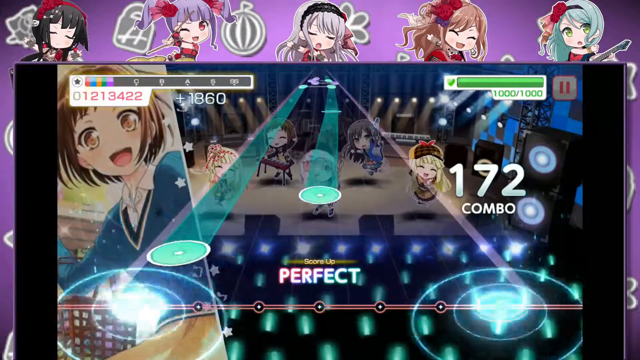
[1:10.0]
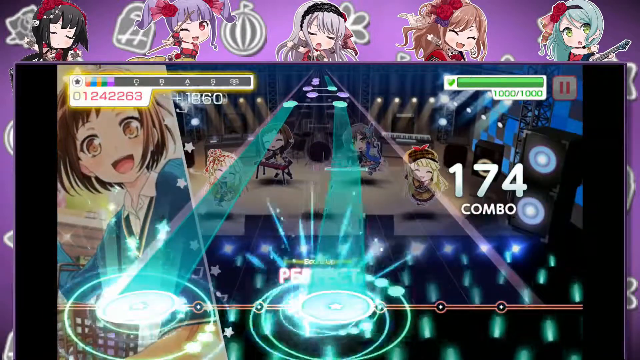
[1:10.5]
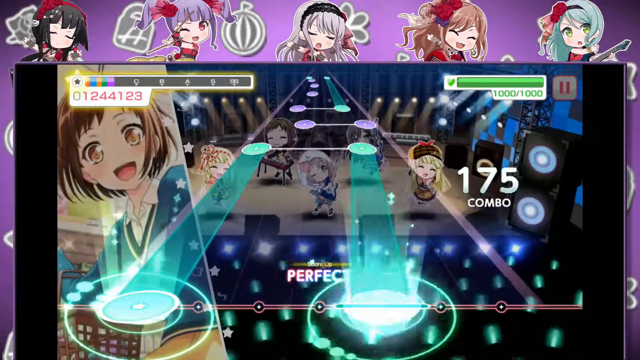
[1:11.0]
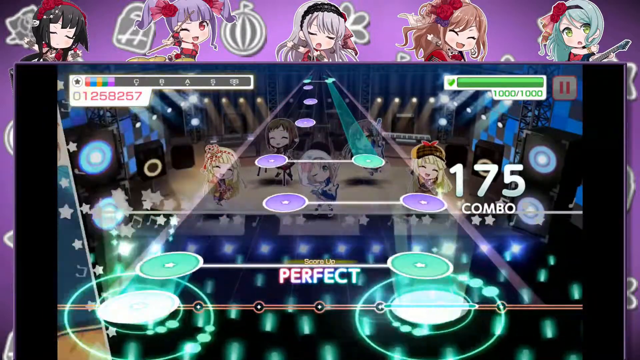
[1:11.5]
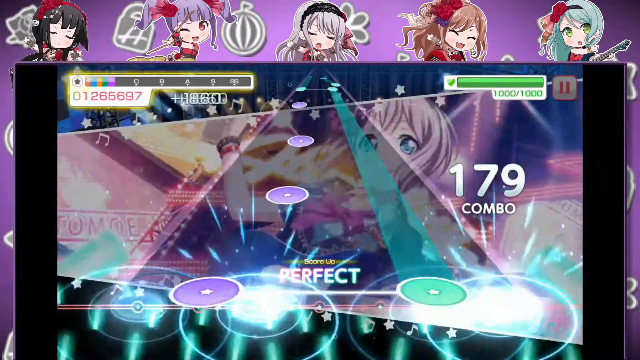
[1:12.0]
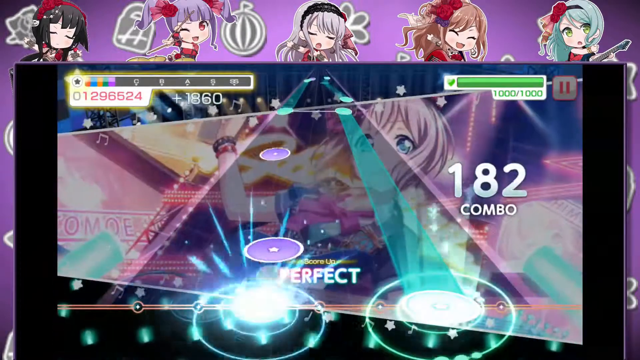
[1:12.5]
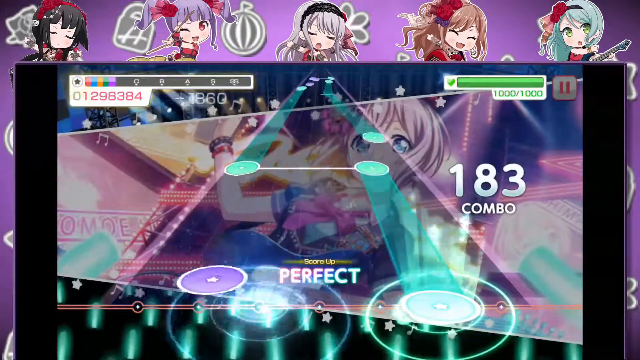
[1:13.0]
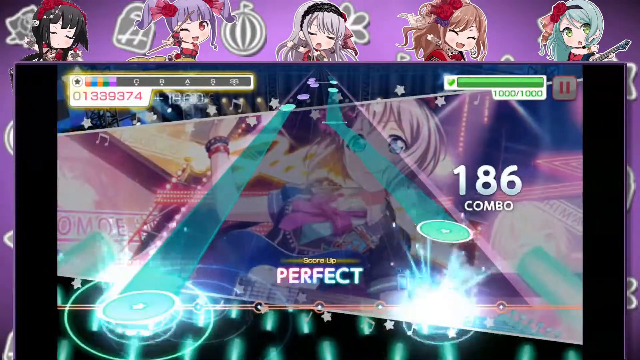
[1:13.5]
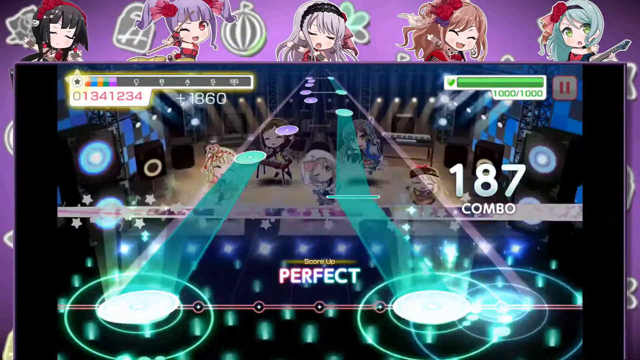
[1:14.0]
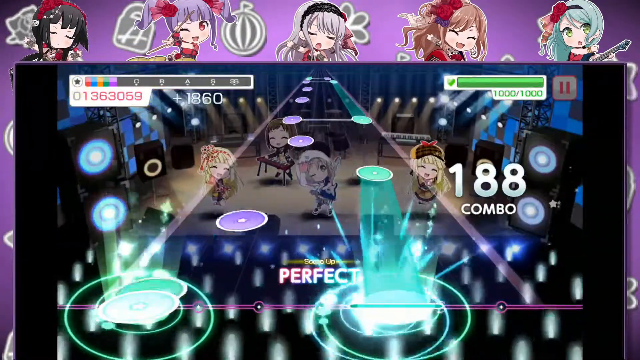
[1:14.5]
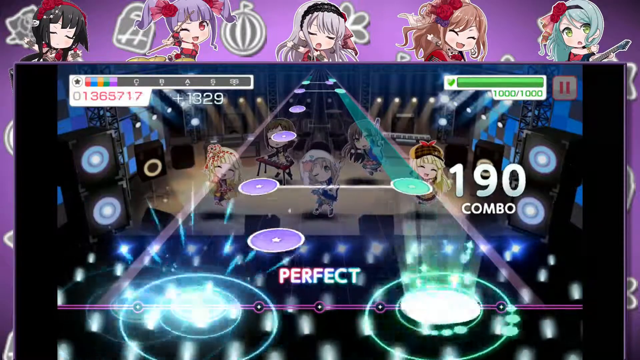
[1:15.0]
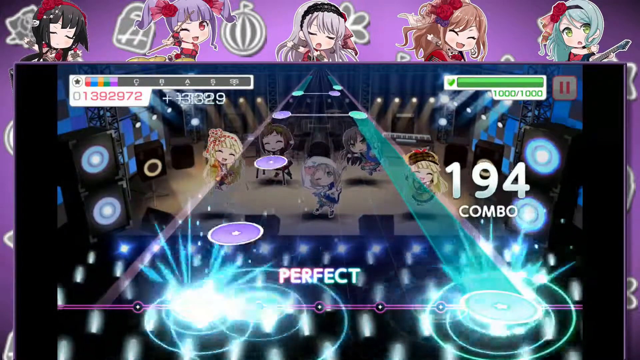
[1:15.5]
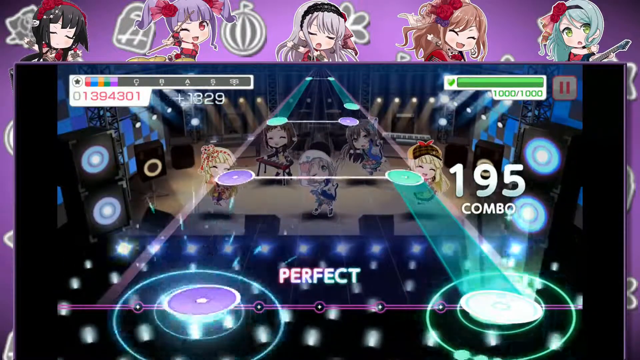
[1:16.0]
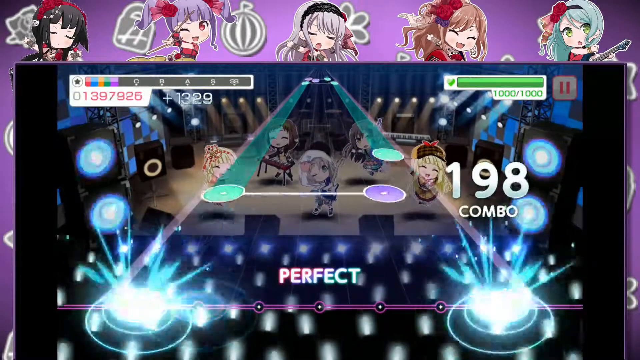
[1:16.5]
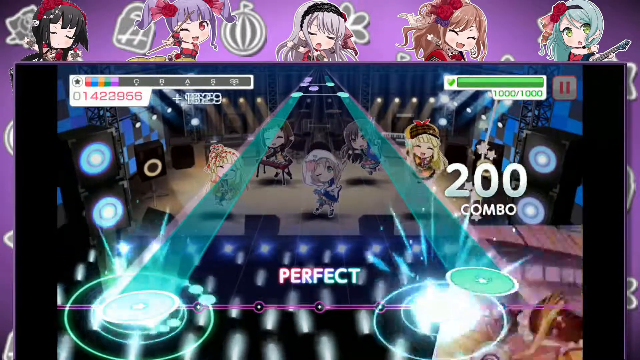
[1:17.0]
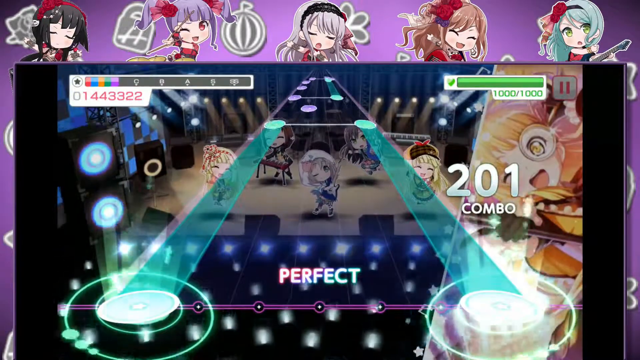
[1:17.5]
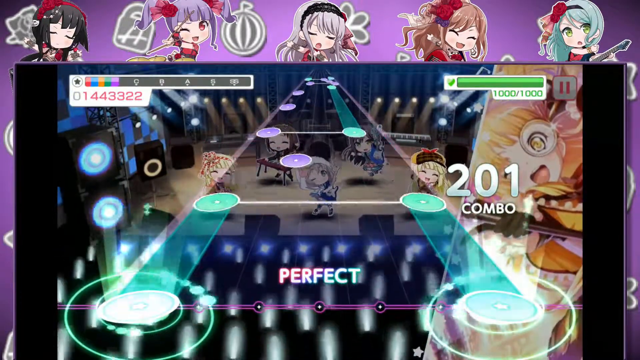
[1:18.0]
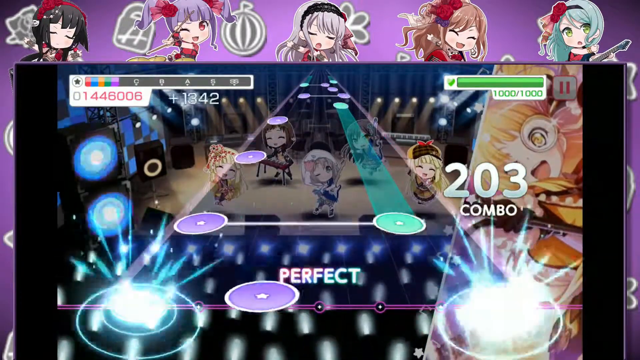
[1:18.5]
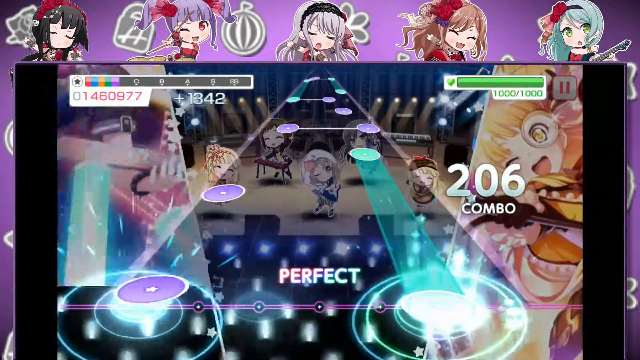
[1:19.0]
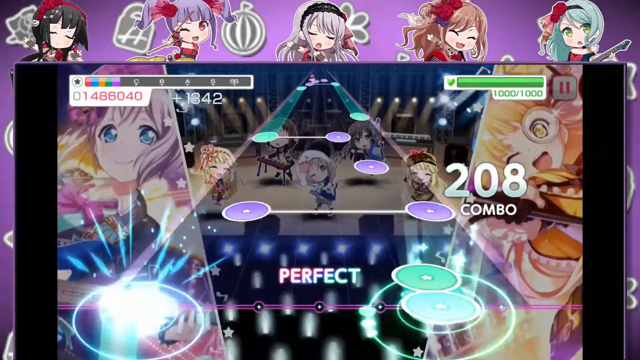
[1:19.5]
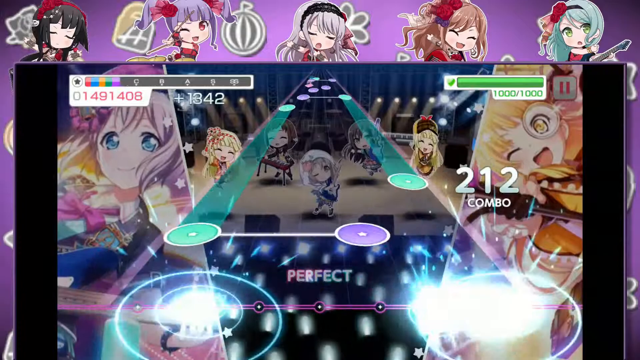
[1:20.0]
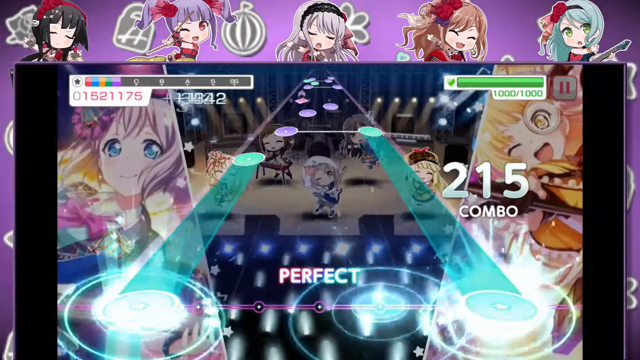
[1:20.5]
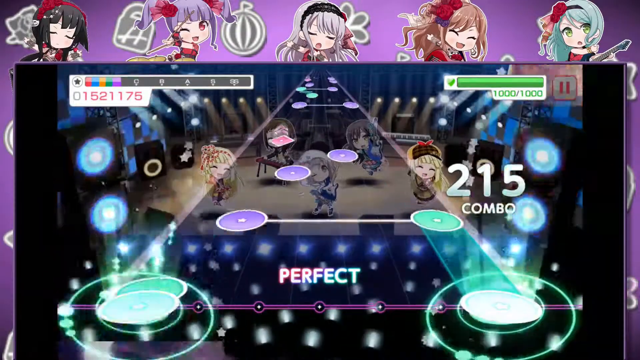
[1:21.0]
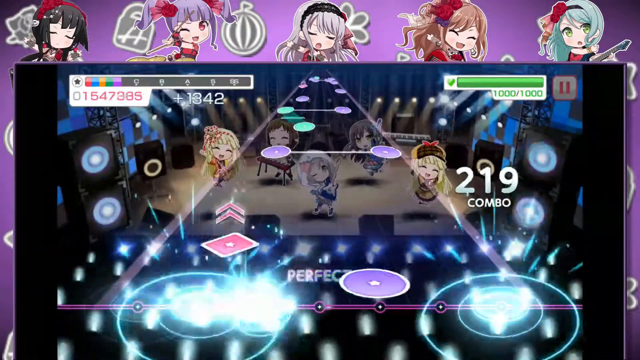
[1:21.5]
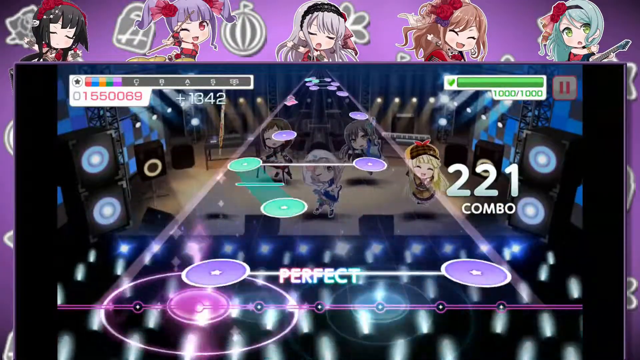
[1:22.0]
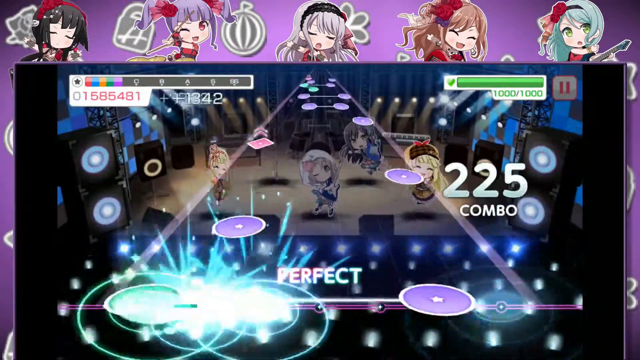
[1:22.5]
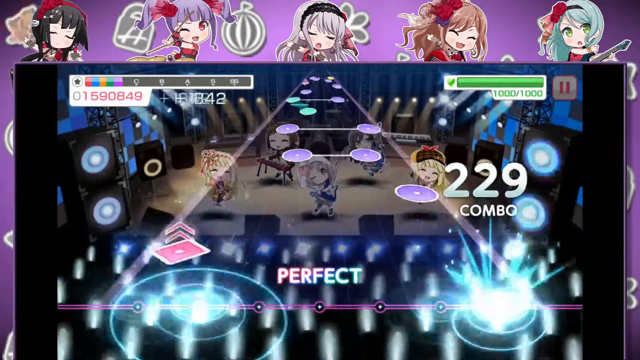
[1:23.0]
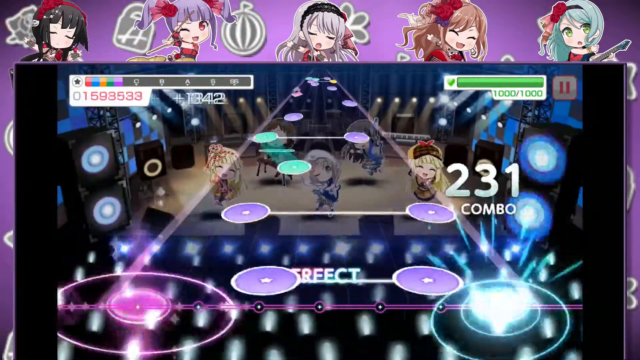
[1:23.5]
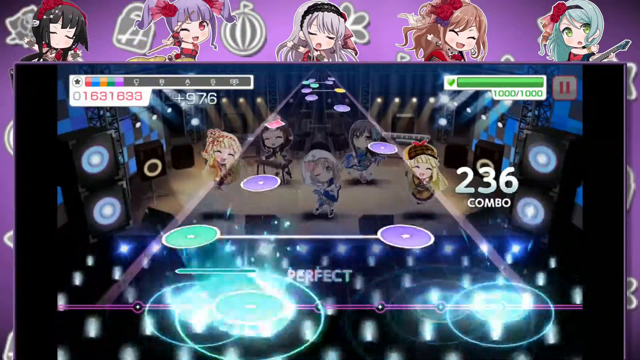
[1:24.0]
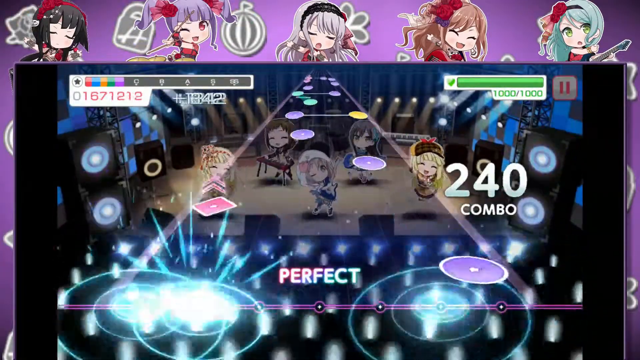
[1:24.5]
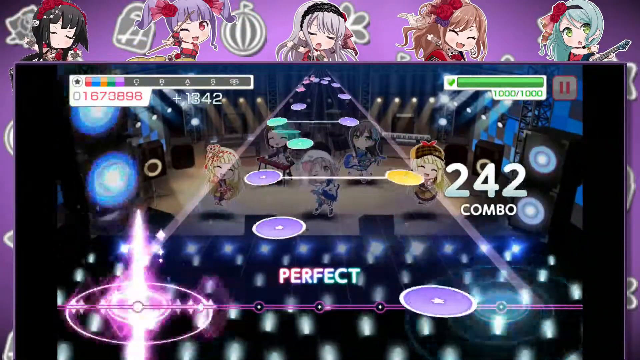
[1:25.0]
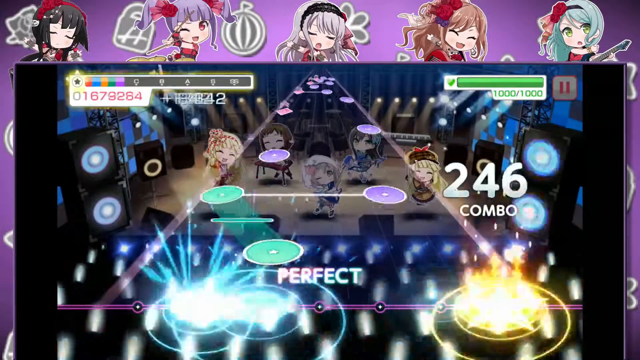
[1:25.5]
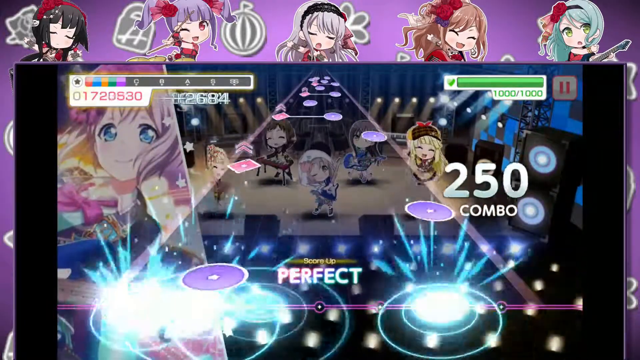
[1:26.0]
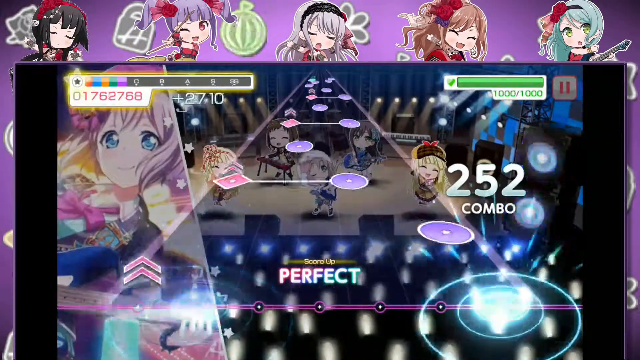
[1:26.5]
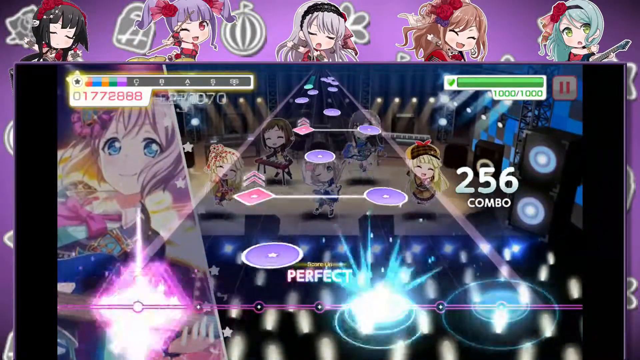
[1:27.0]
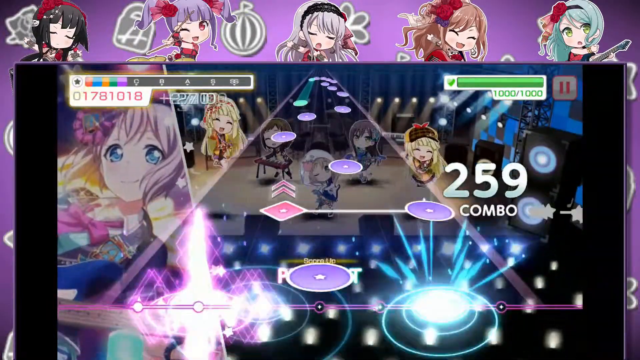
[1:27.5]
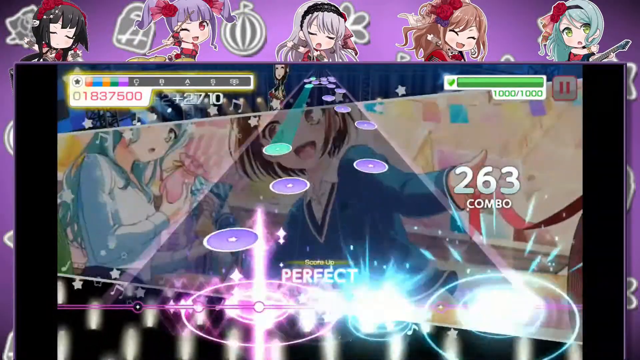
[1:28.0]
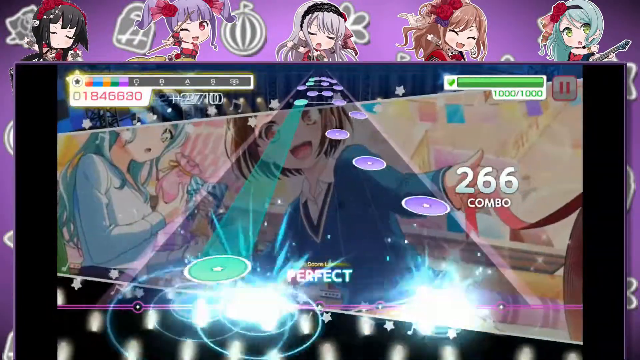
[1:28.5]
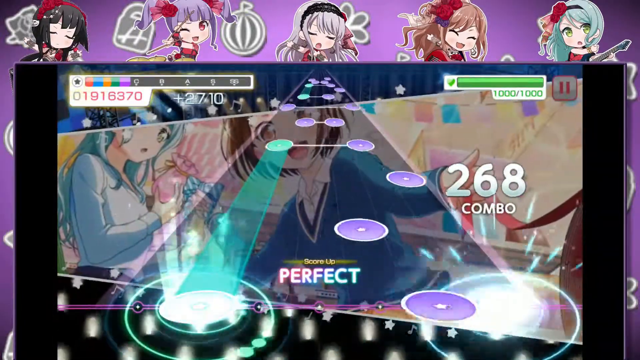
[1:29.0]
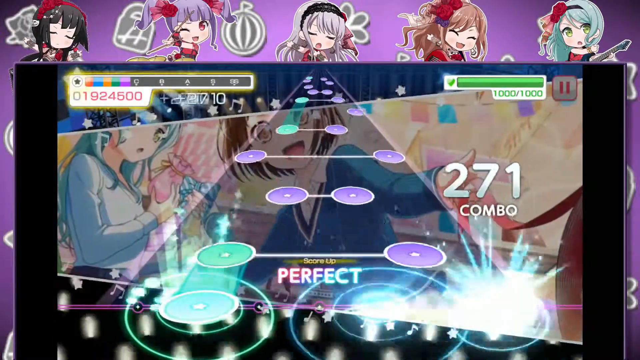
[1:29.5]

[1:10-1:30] A phone has a game open, and it looks like a rhythm game being played. Various buttons are pressed as the game progresses, appearing one after the other on the guitar, with an anime band of girls in the background. As the song progresses, the combo gets higher and higher, and the player is possibly earning more points, shown in the upper left corner. In the background of the phone are five different anime characters that more or less fit the tone of the game. Cut-ins of various anime girls, possibly playing instruments, appear as the game progresses: a brown-haired girl and two pink-haired girls, in both vertical and horizontal cut-ins. There is also a crowd at the concert cheering on the girls, and some big speakers.